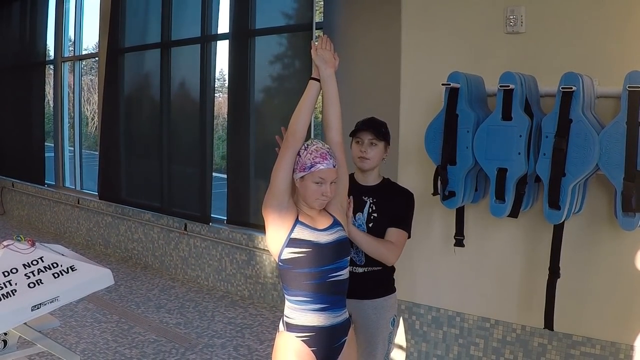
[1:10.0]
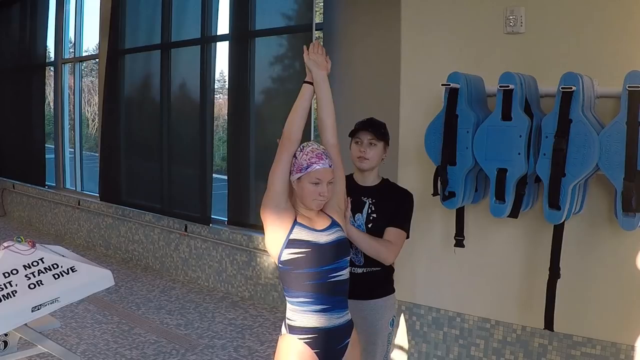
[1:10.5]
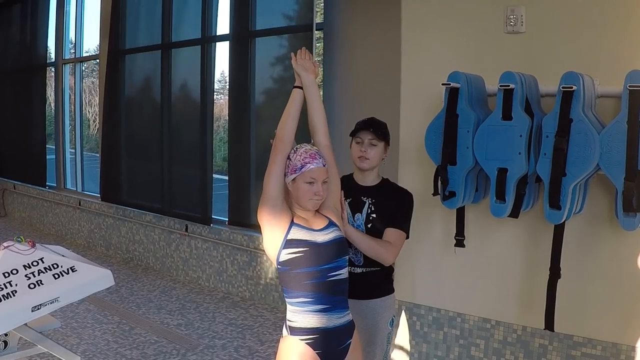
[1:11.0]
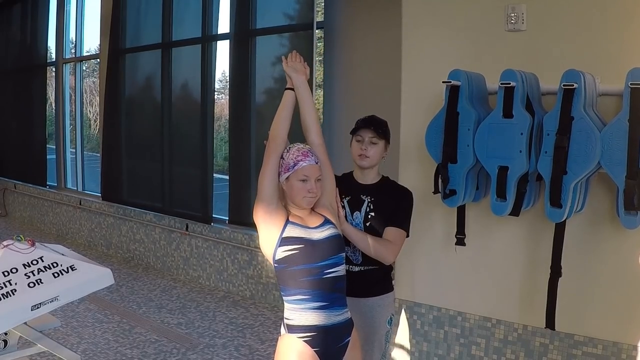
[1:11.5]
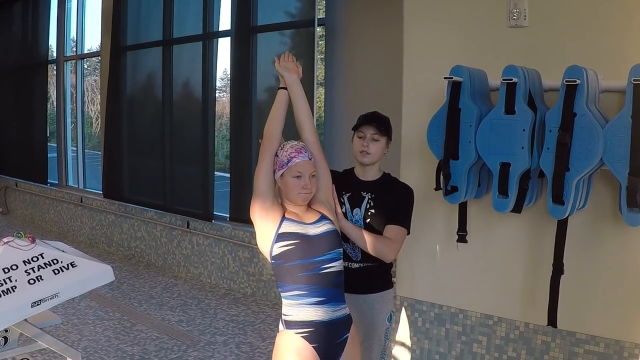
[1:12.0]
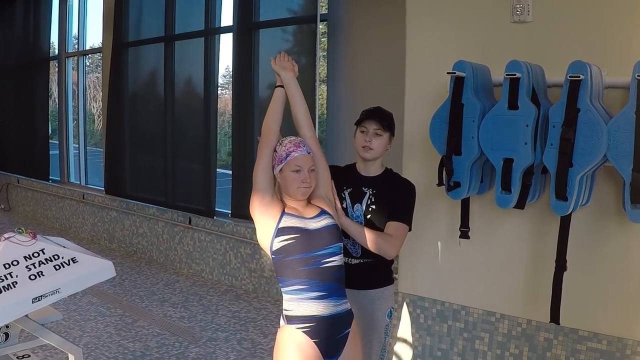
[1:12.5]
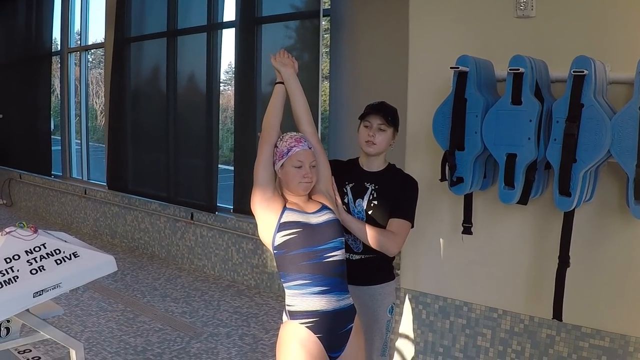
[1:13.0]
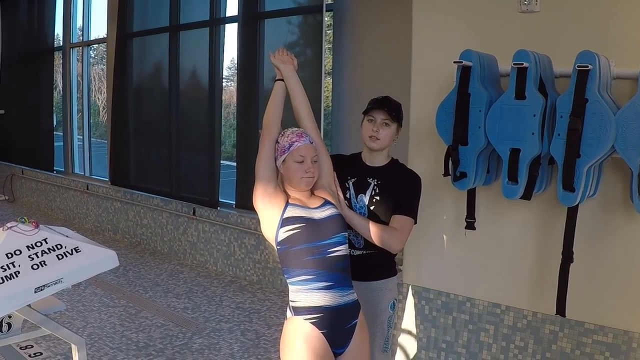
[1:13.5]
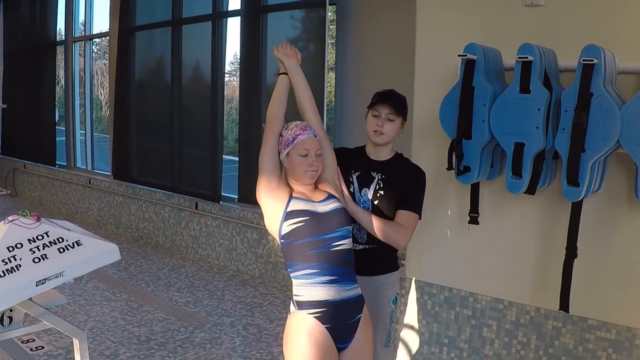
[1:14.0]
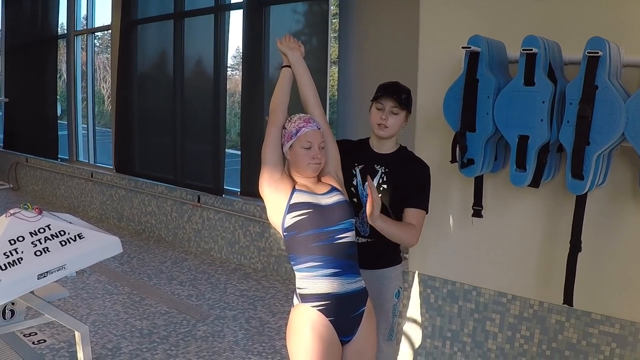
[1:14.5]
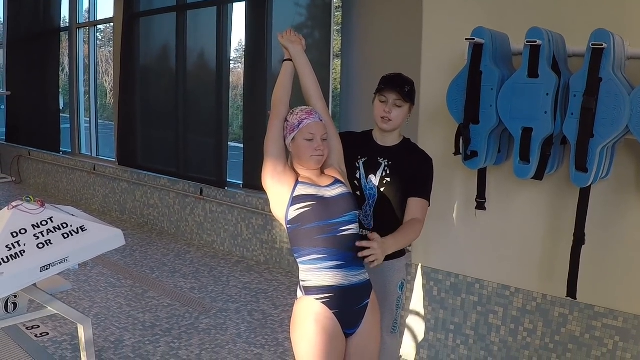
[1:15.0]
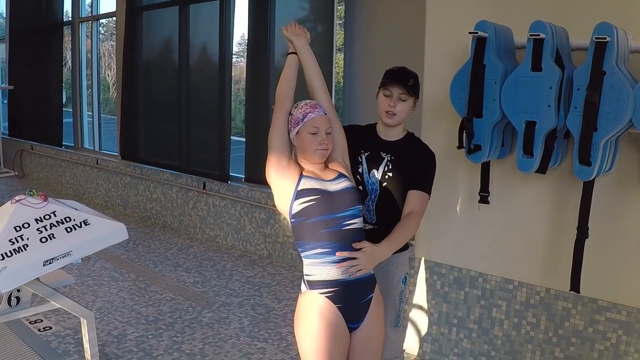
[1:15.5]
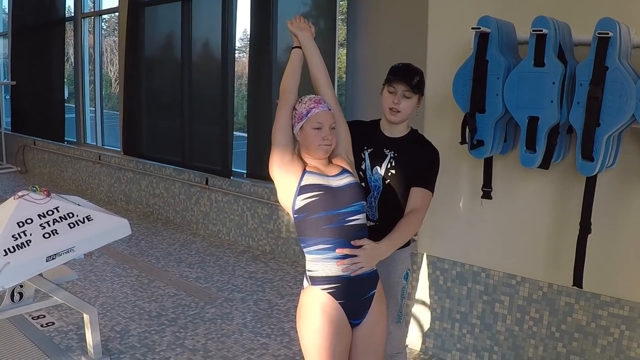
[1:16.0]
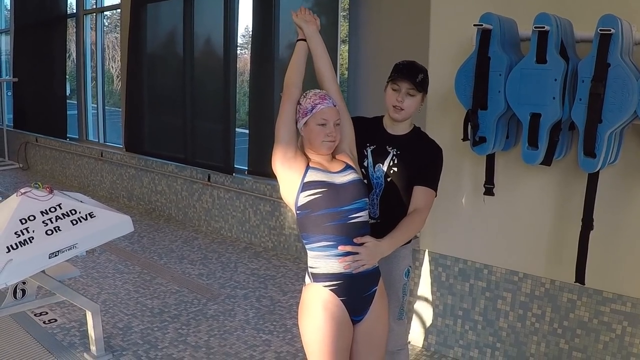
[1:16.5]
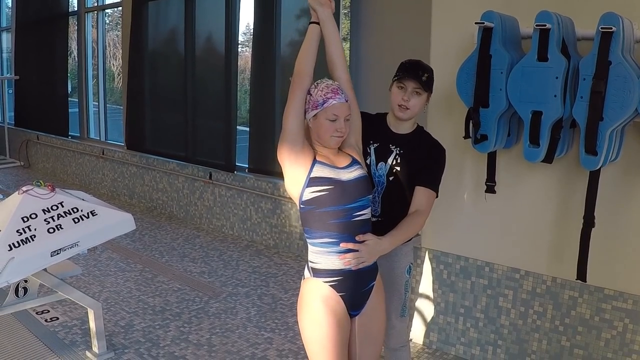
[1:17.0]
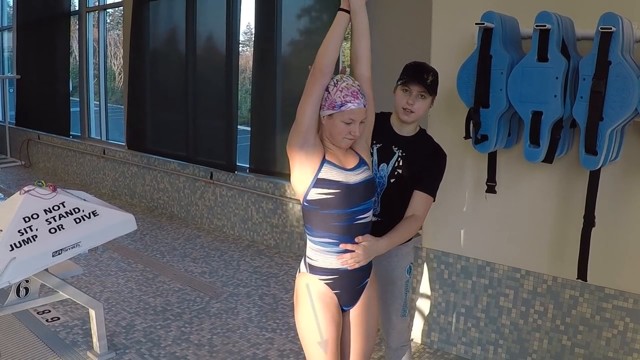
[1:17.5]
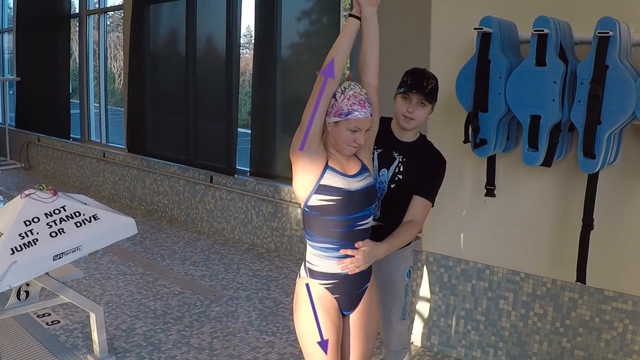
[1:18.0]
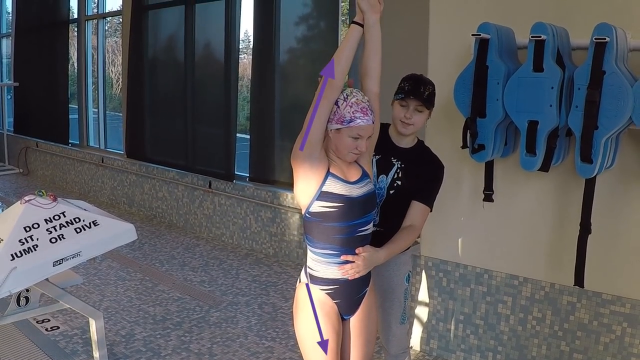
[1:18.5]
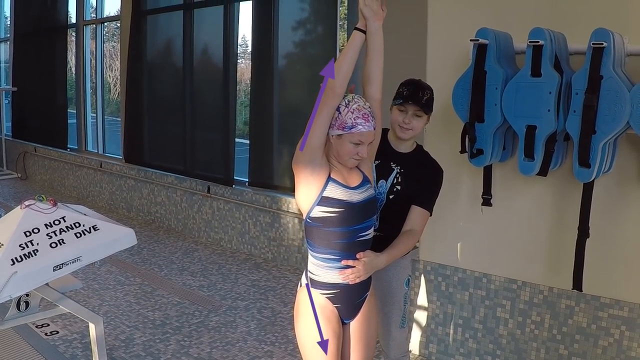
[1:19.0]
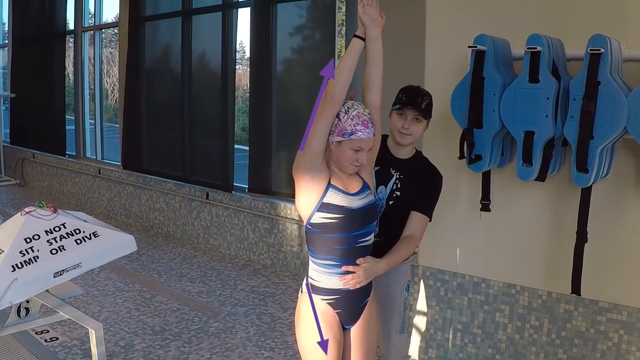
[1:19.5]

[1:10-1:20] The female swimmer stands upright outside the pool with her arms outstretched above her head, her hands one over another and her fingers straight. A fully clothed female trainer holds the swimmer's arm and has one hand around her lower back. The swimmer begins to lean back, almost like a trust fall. Keeping her right arm around the swimmer's lower back, the trainer moves her left arm to the front and grabs the swimmer's abdomen, letting the swimmer lean back slightly and then rock forward to mimic entering the water.